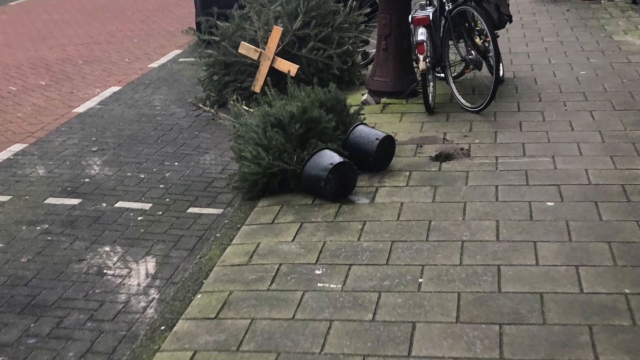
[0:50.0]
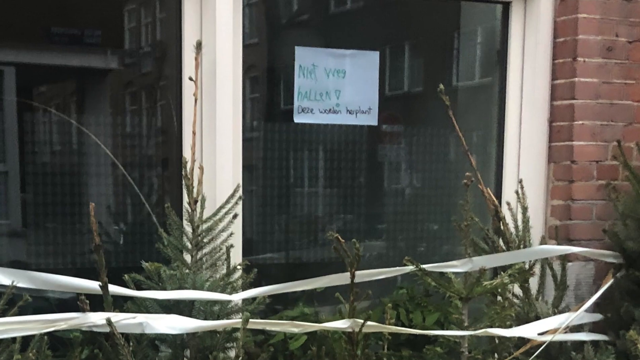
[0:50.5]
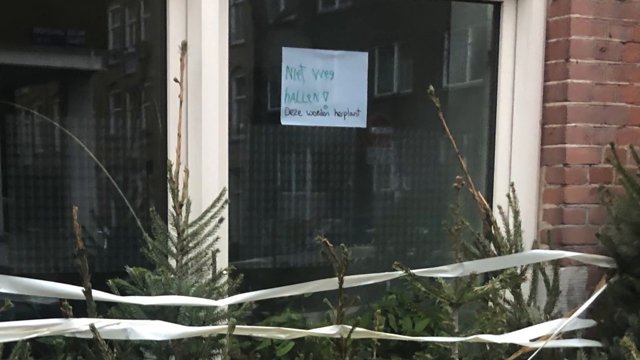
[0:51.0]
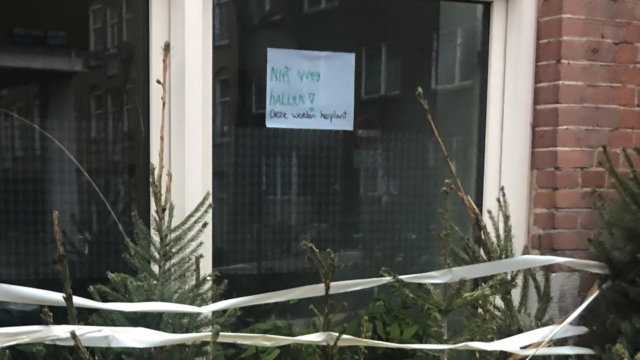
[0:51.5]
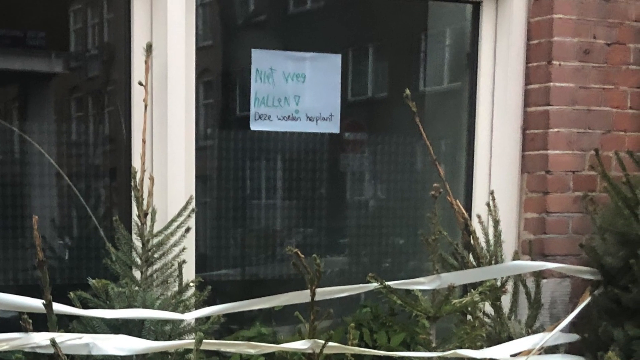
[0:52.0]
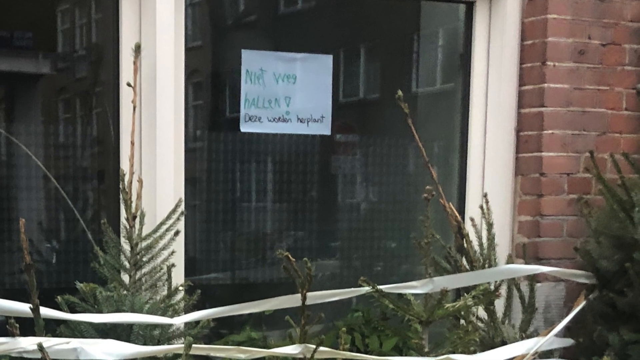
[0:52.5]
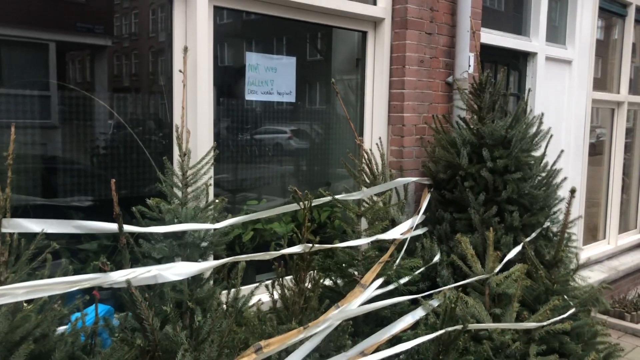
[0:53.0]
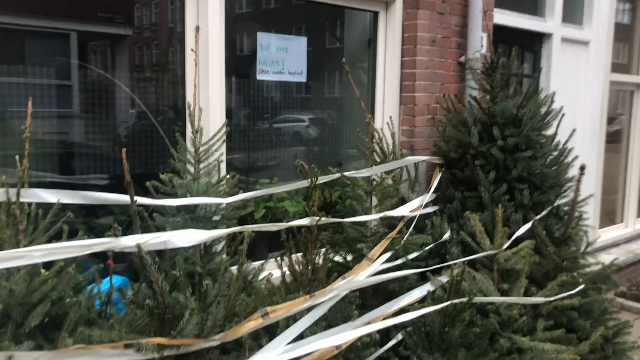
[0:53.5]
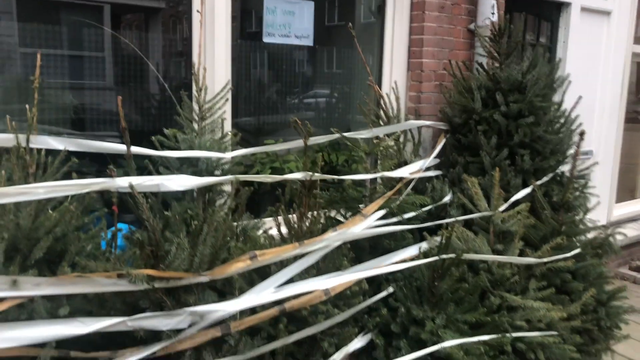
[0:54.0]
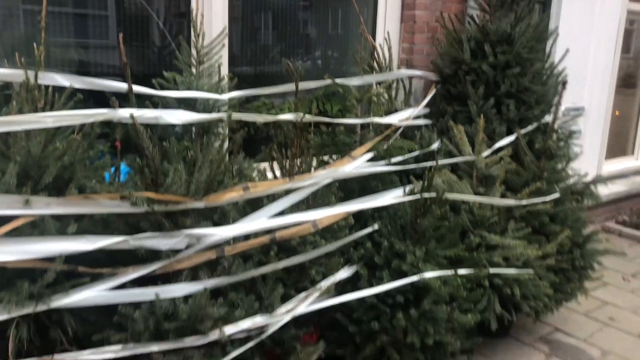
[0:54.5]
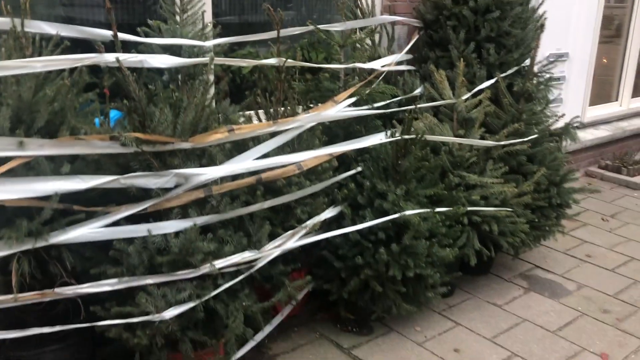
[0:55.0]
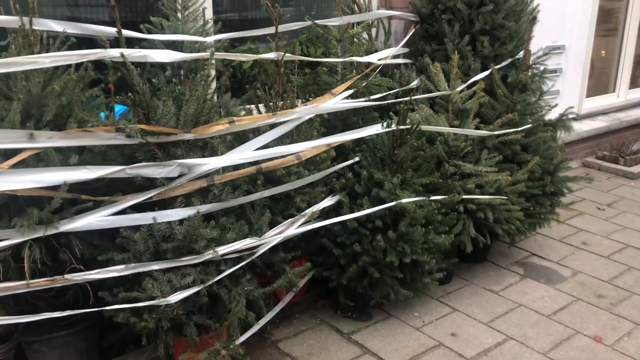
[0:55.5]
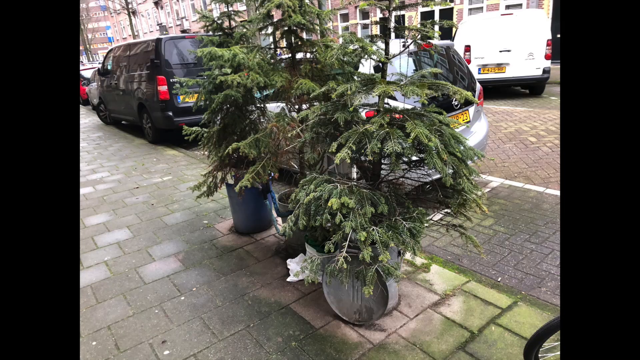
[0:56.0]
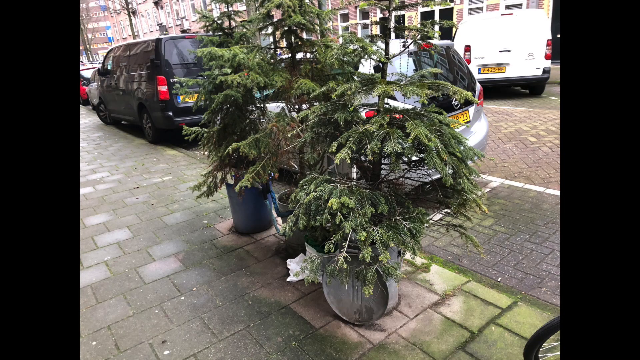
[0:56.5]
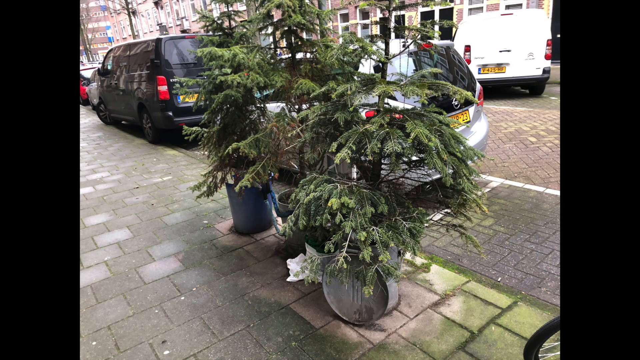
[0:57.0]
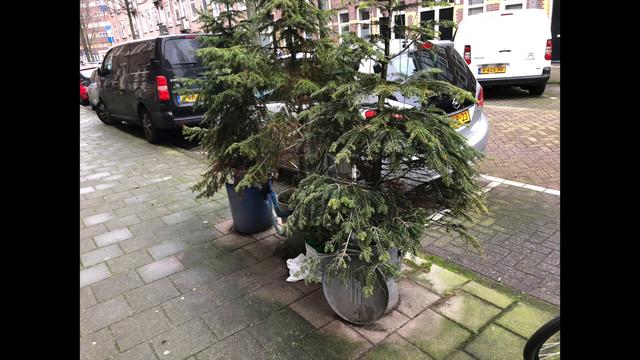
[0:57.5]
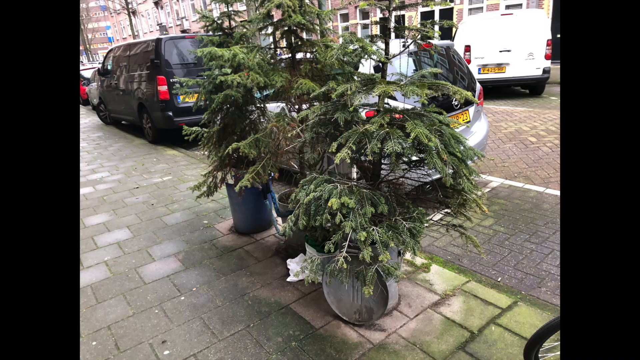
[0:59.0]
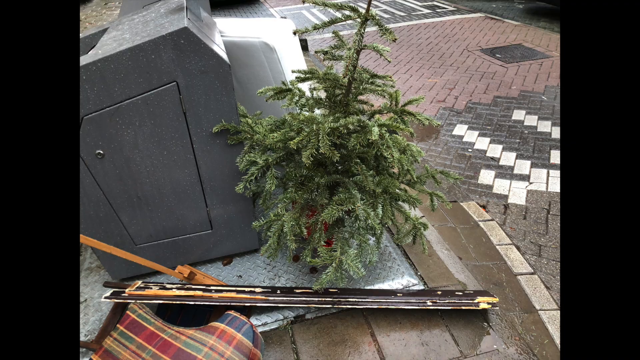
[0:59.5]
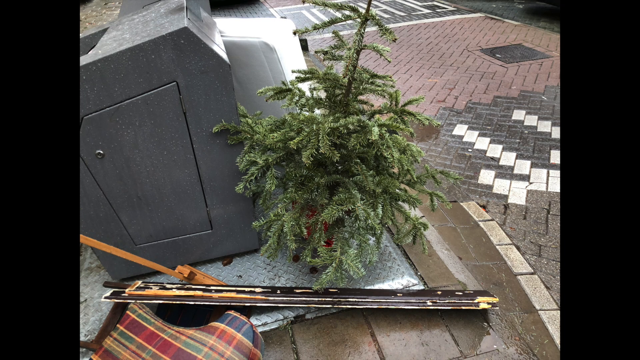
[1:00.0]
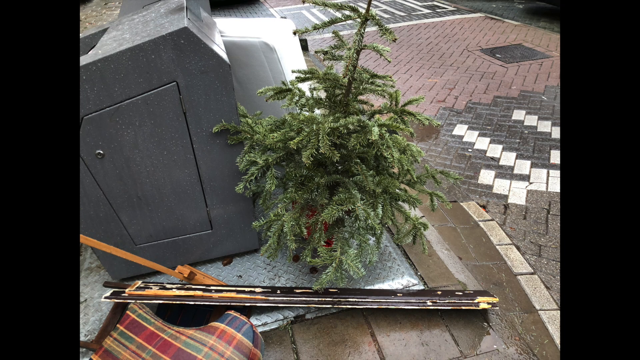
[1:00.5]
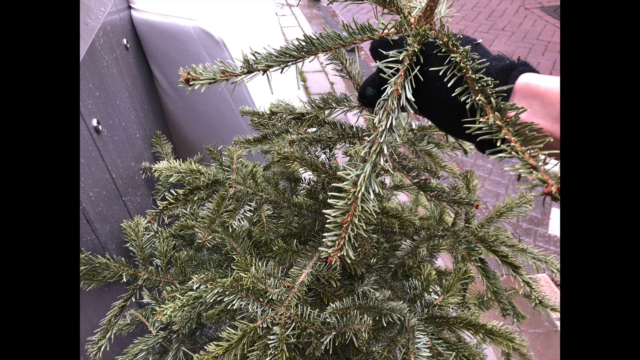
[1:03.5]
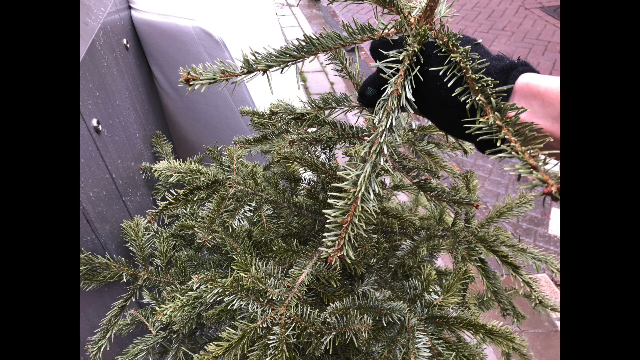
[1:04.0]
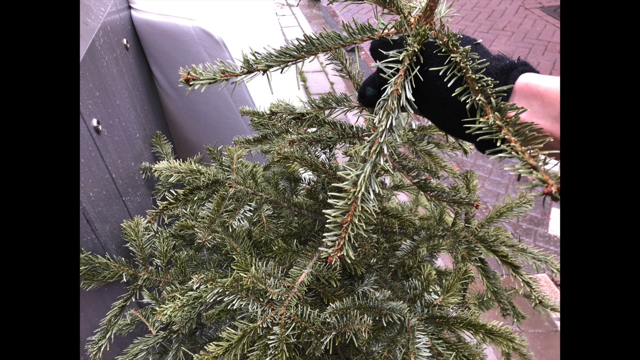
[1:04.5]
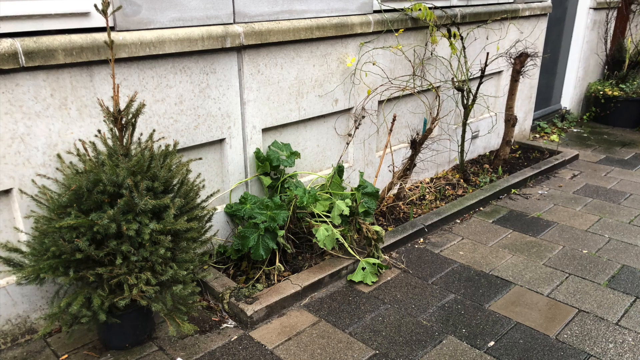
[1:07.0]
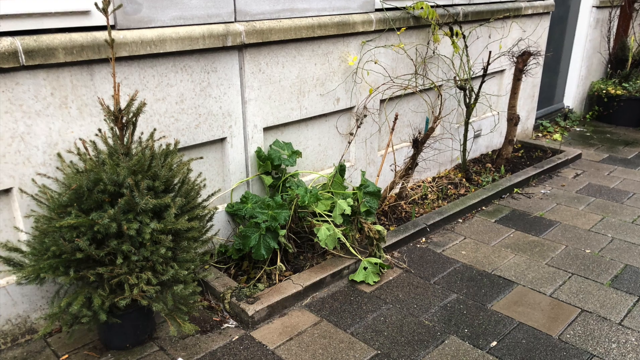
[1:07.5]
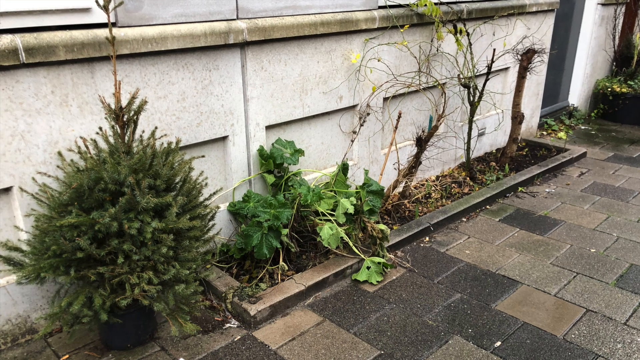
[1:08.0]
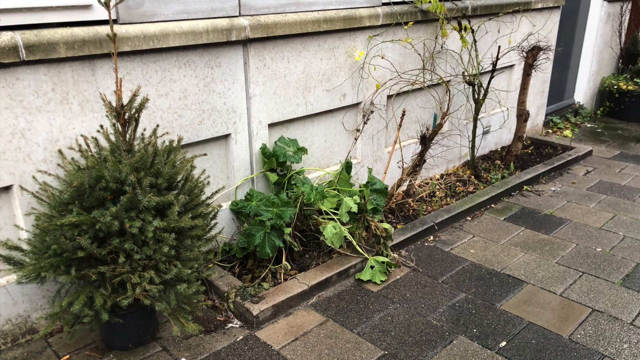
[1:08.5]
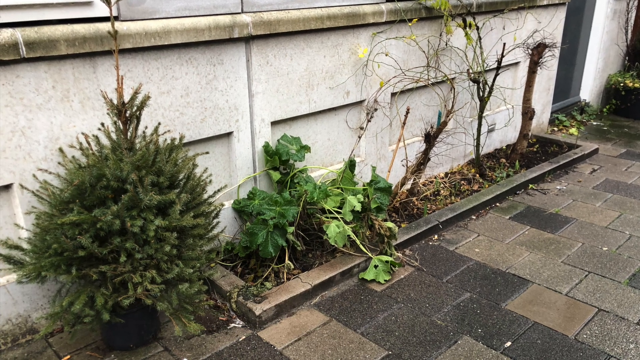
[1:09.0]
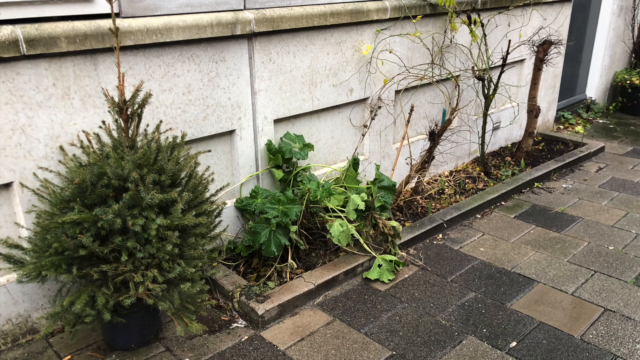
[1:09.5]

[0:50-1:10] Trees have been cut down, with ribbons around them, possibly Christmas decorations being cleared away. Material is scattered all over the place, perhaps blown by the wind or perhaps Christmas decorations. Much of the scenery is nature. There is a bicycle, and the pavement is neatly laid with no litter around. The houses are made of bricks. A car has a yellow number plate, and there is an Opel car and a Citroen minibus. A black car with a yellow plate is of an unclear brand, possibly Citroen.